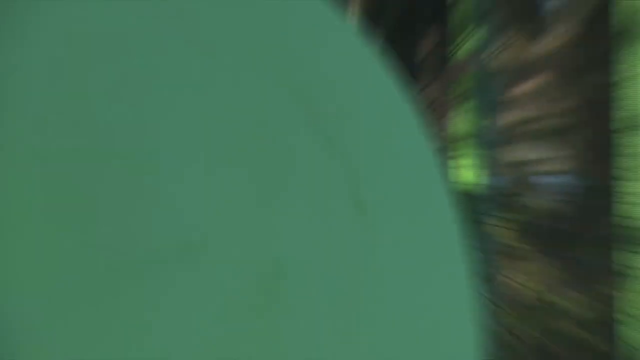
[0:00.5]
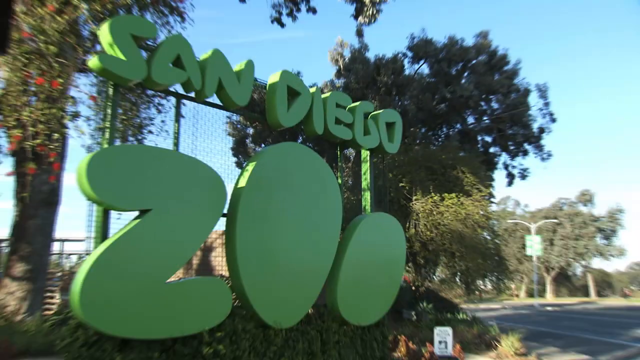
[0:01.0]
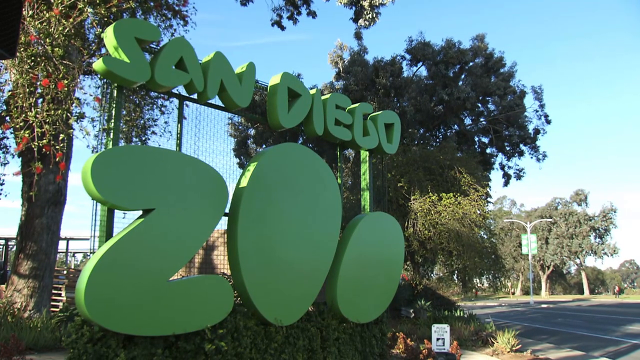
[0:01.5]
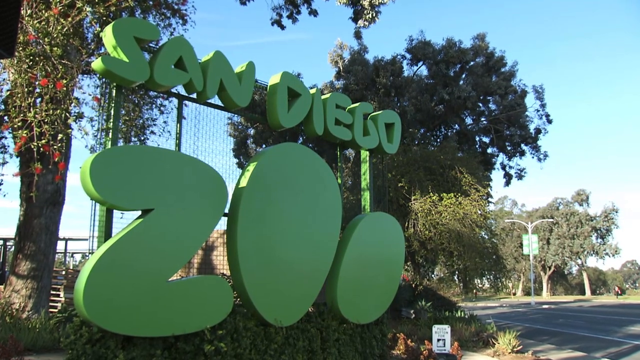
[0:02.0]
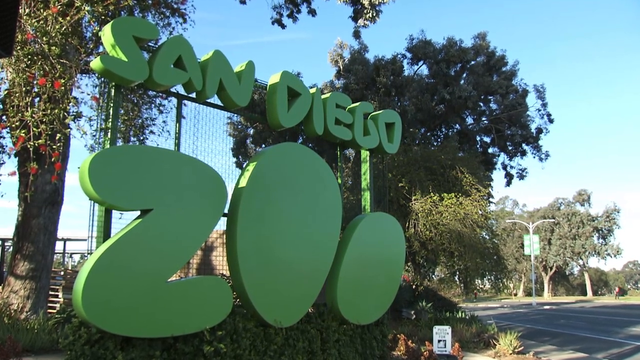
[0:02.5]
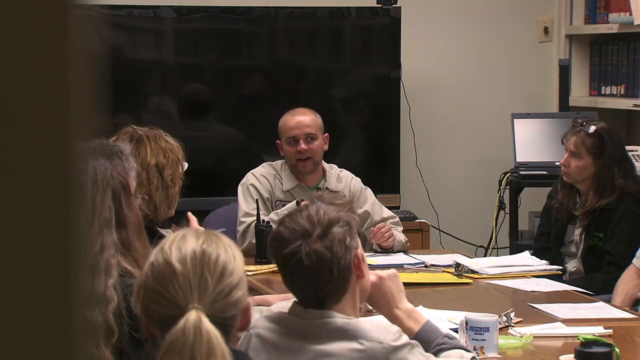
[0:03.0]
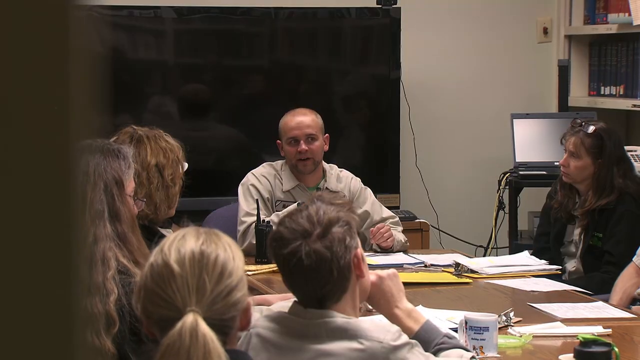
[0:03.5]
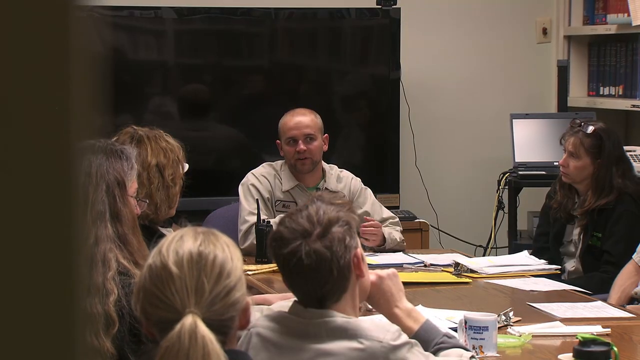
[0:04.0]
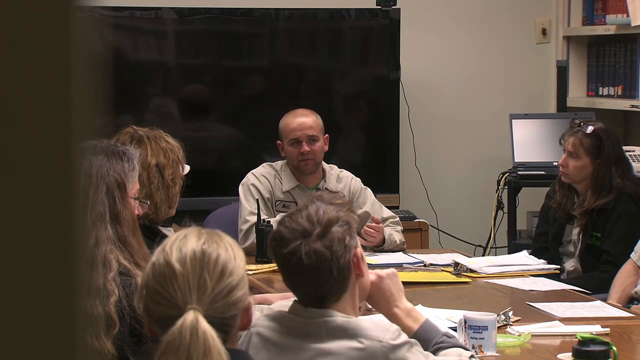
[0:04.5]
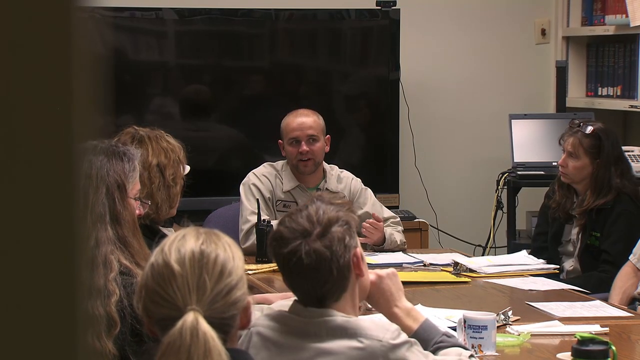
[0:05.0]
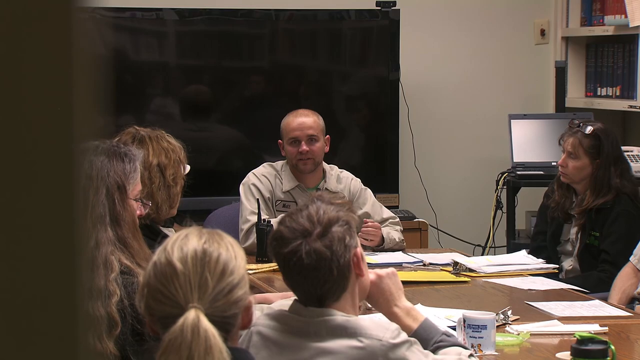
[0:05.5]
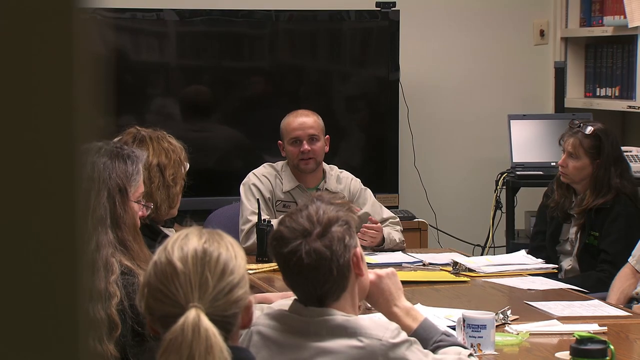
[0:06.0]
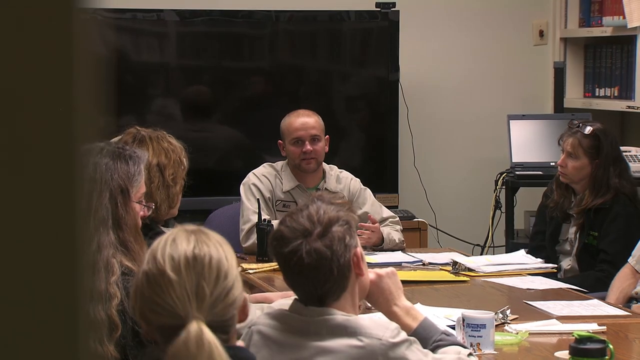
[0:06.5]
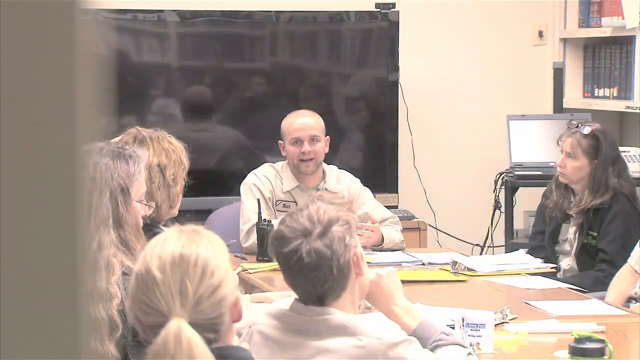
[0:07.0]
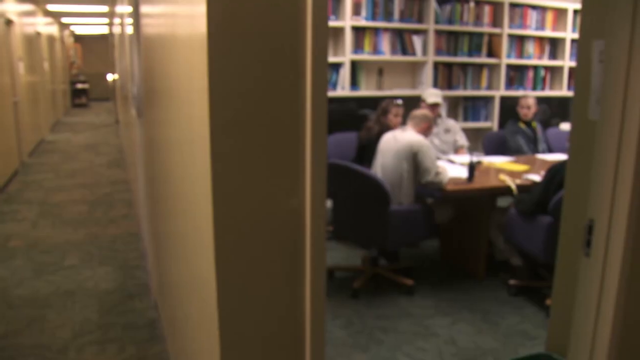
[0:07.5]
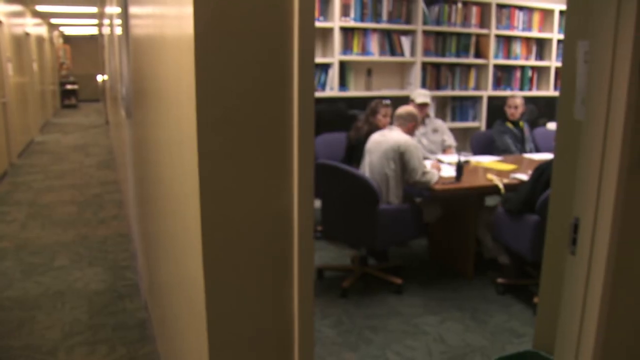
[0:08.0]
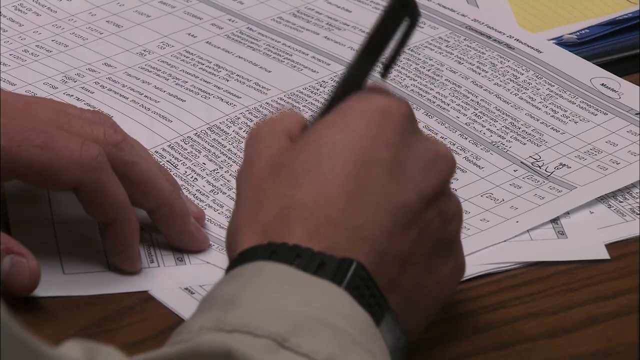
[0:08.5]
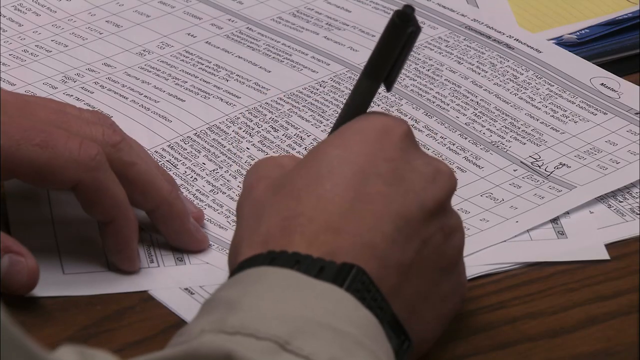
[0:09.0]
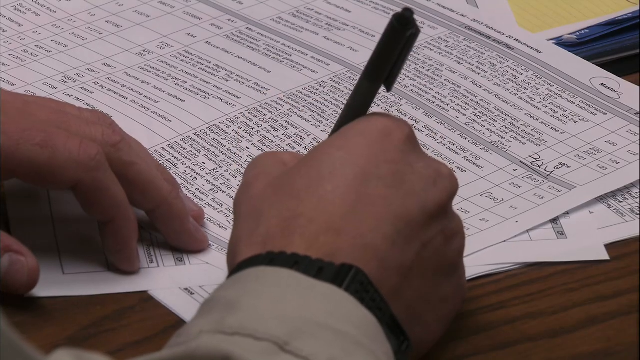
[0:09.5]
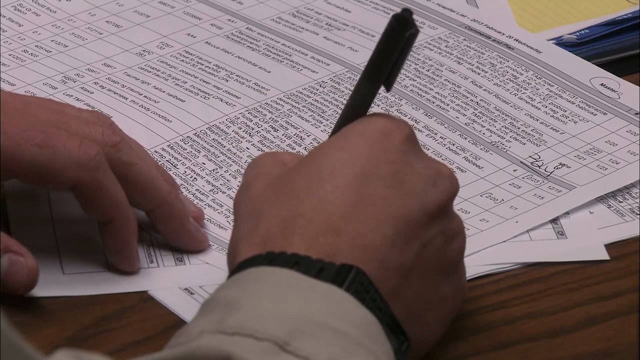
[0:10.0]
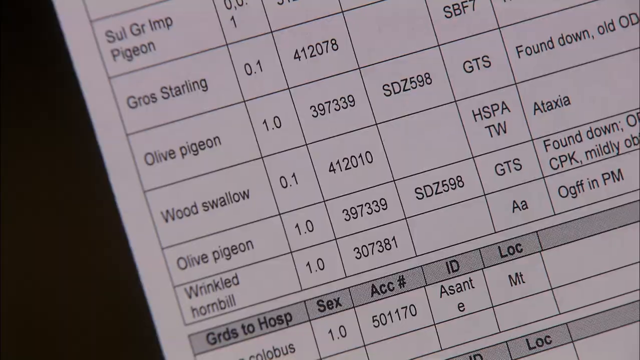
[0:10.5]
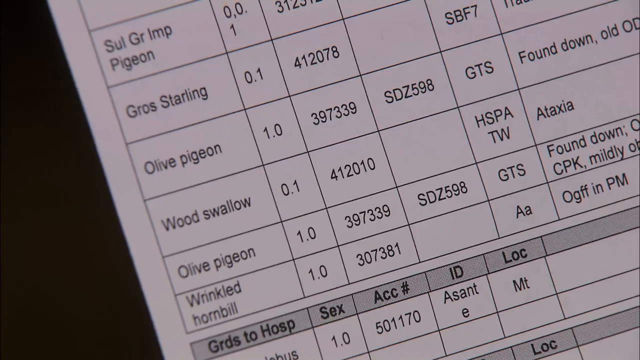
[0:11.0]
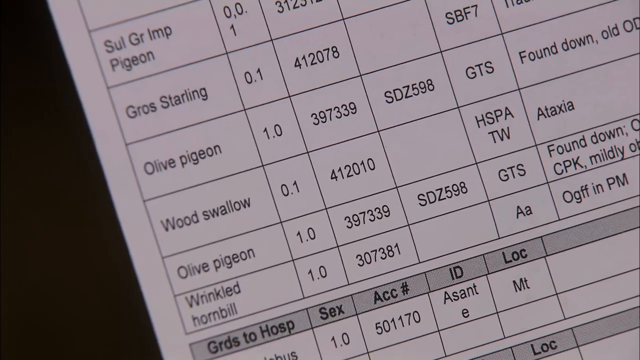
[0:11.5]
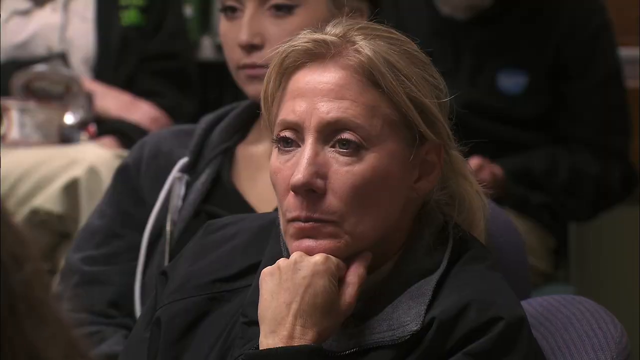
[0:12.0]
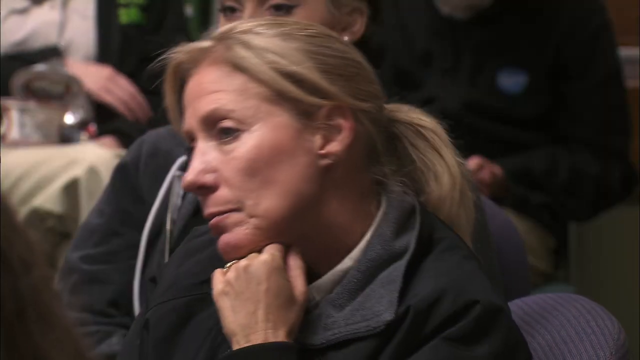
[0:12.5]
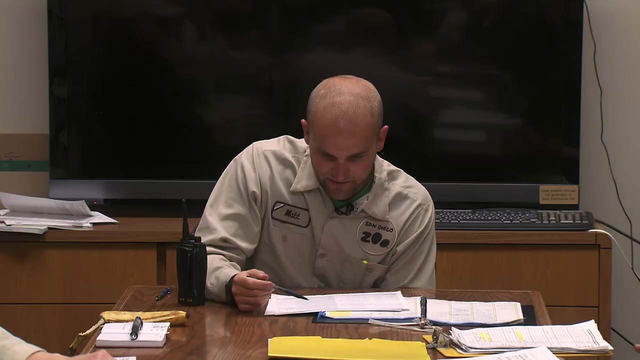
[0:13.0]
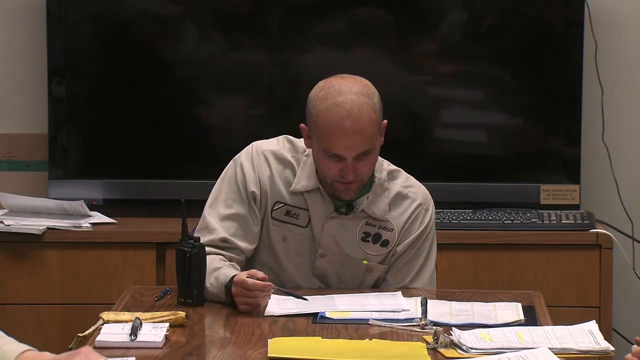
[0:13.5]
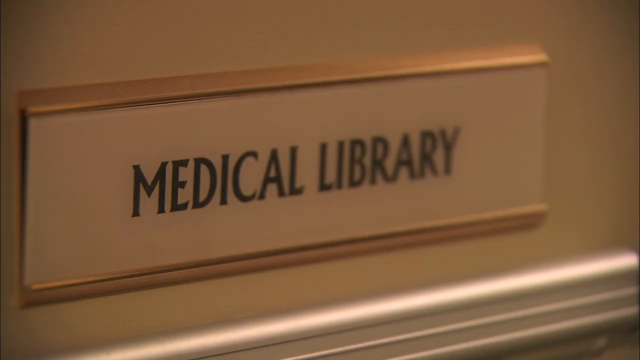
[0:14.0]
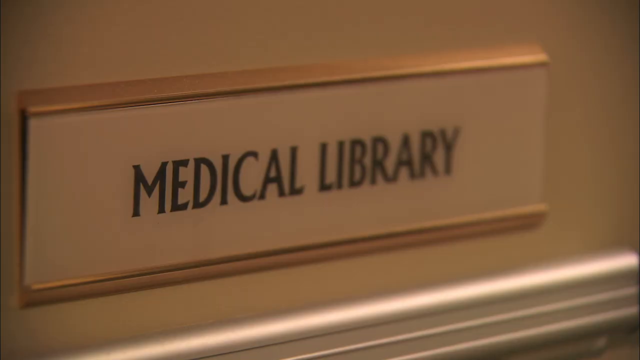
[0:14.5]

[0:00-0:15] An opening shot shows the San Diego Zoo, where the video is set. Some people who apparently work for the zoo sit around a table going over paperwork, probably medical material. A man talks at the head of the table while the others listen with their papers in front of them. Many books fill the bookshelves around them. One paper lists the names of various animals, and its far right column appears to list the medical ailment affecting each animal. A brief flash reads "medical library", suggesting a veterinarian-type meeting.